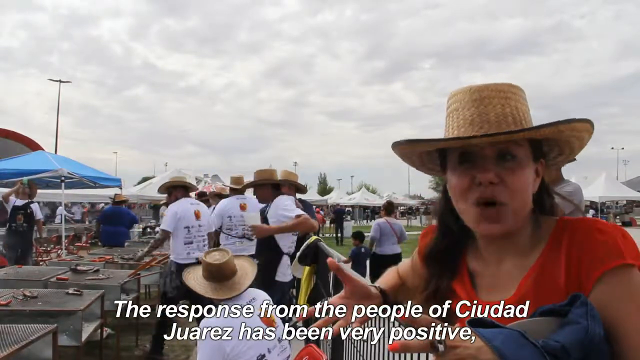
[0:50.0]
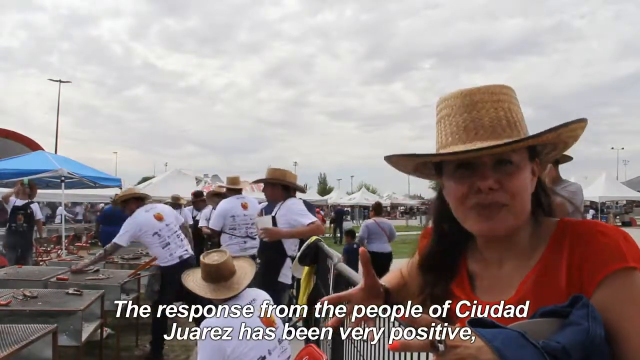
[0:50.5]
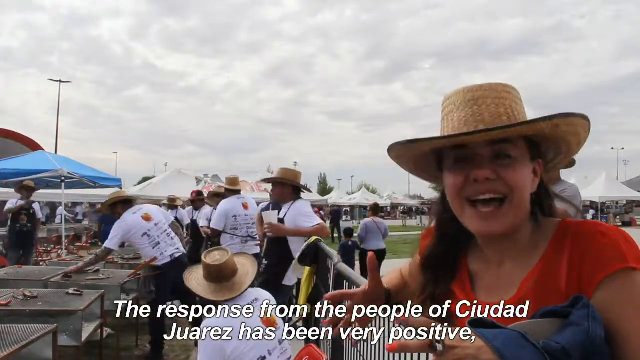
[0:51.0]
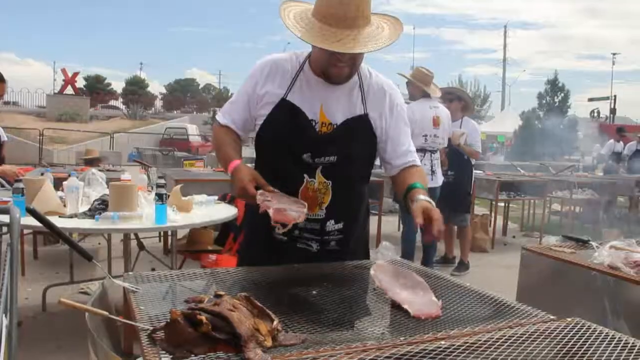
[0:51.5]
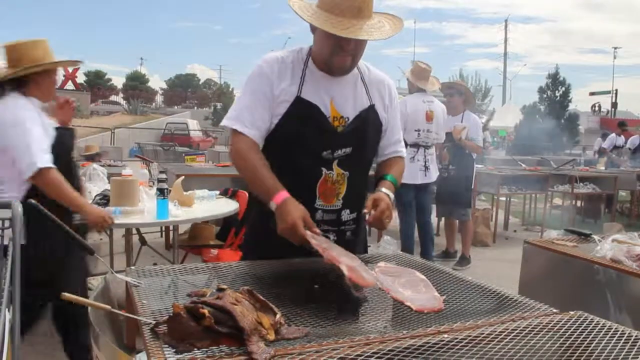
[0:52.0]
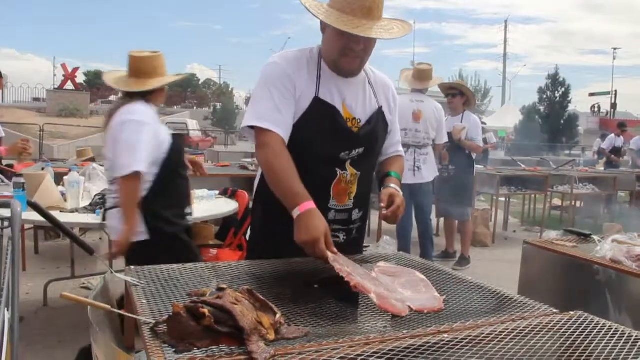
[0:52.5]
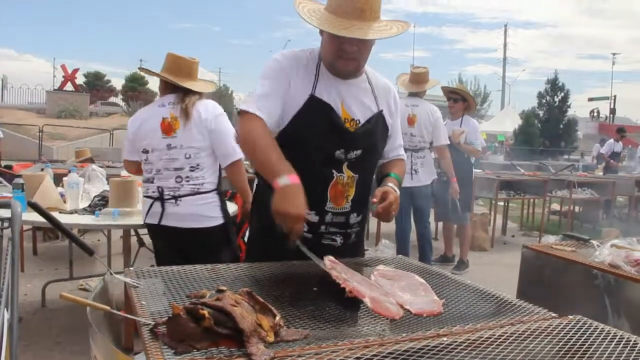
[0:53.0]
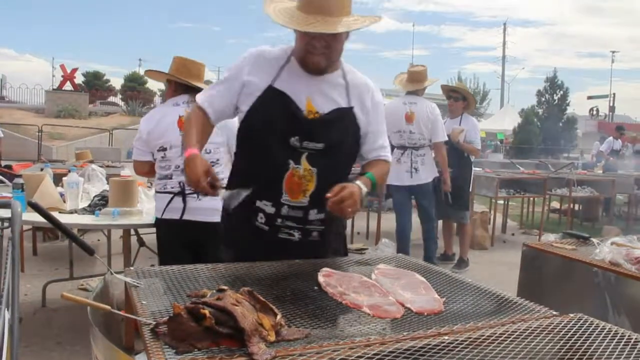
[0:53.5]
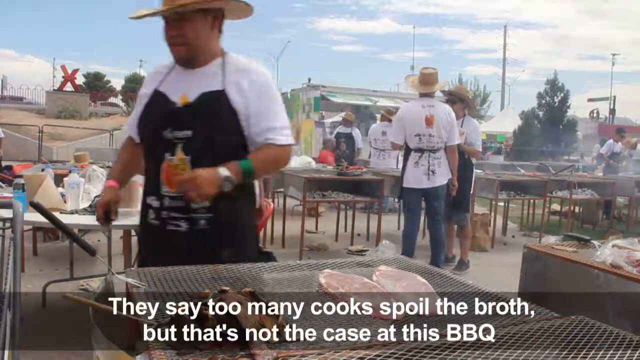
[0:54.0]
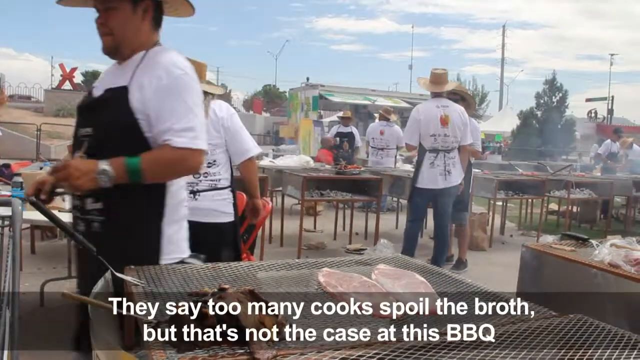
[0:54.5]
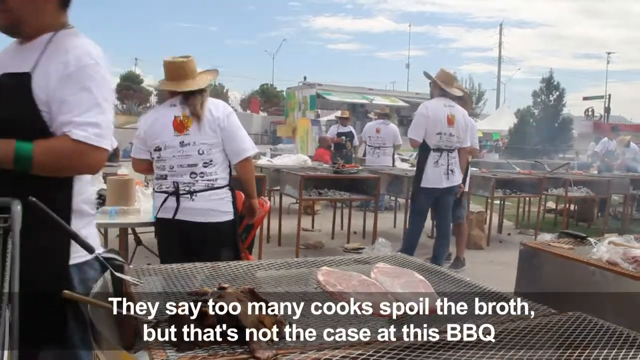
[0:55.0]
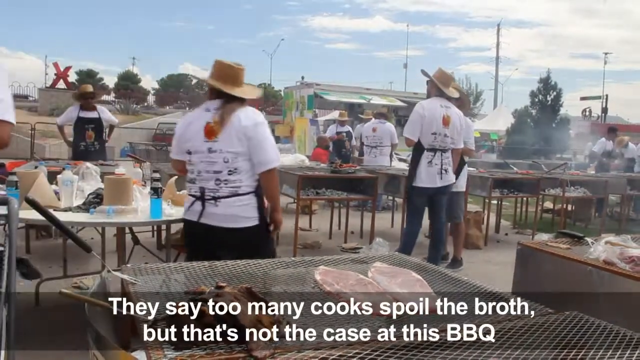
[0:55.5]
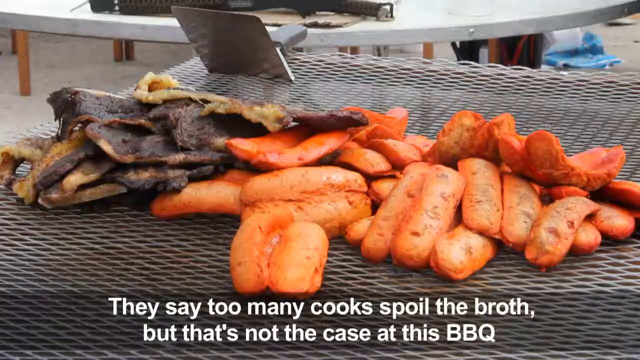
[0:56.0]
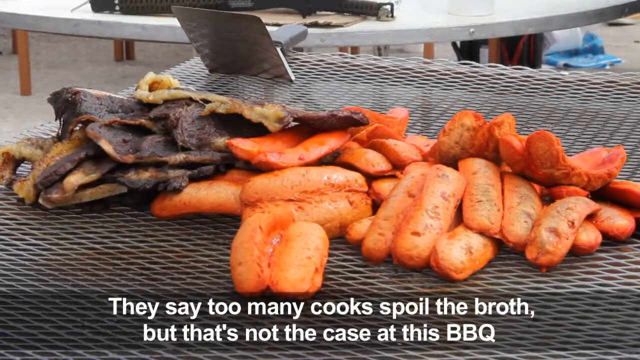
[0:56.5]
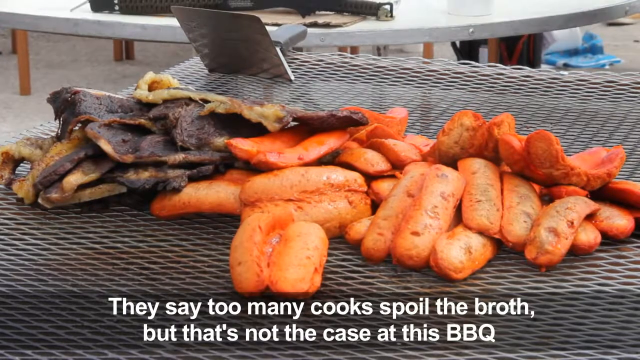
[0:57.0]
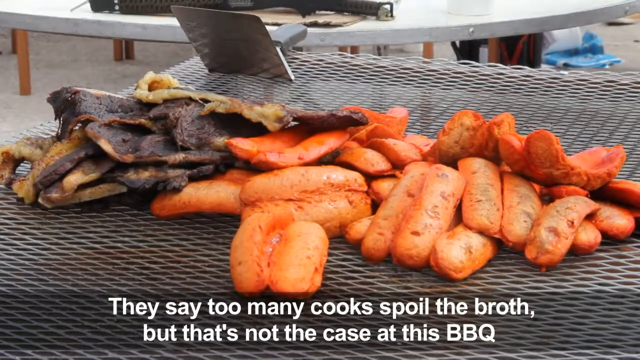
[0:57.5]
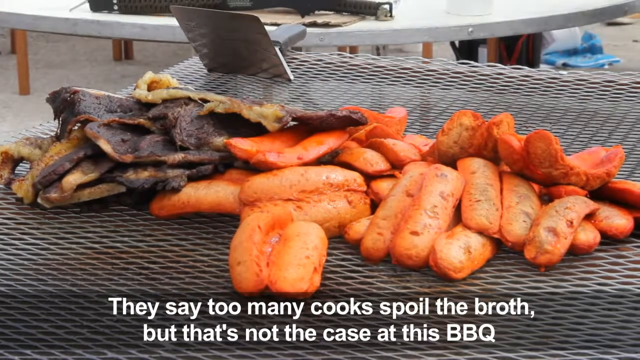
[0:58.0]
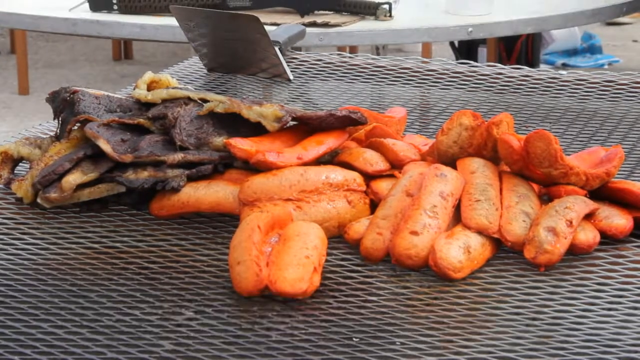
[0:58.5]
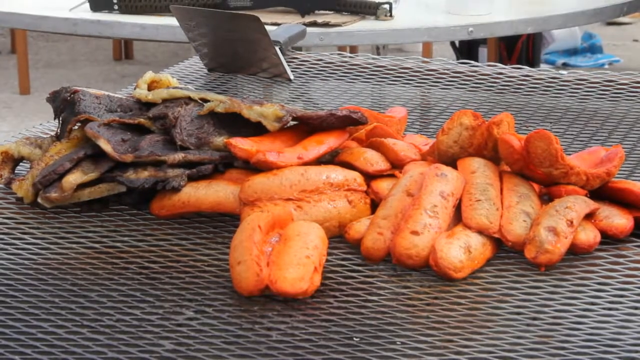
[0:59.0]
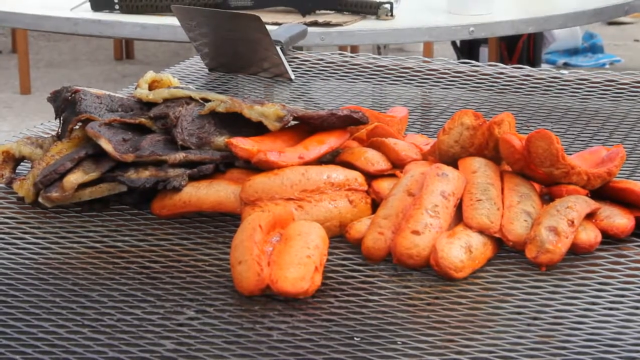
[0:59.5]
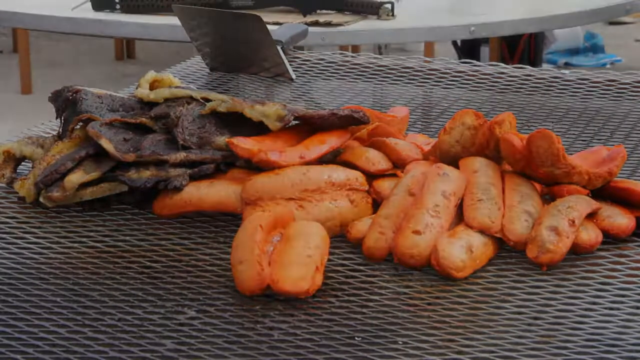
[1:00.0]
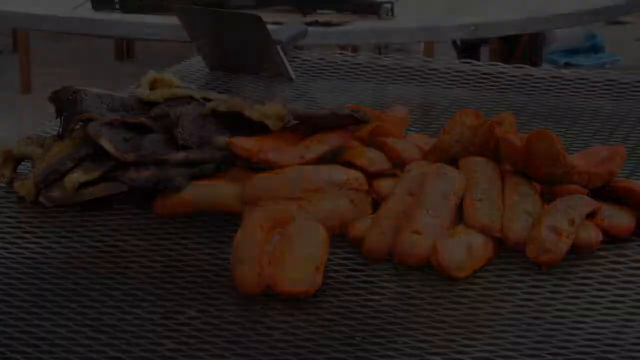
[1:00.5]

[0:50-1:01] The huge Guinness record-breaking attempt for the largest barbecue with the people of Ciudad Juarez, Mexico, continues. A close-up shows a man placing two large steaks onto the barbecue; he wears a straw cowboy hat and a black apron with a pint of beer with a flame coming out of it. A caption on screen reads "they say too many cooks spoil the broth but that's not the case at this barbecue." Many, many more chefs are in the background. A close-up shows barbecue food on a grill.